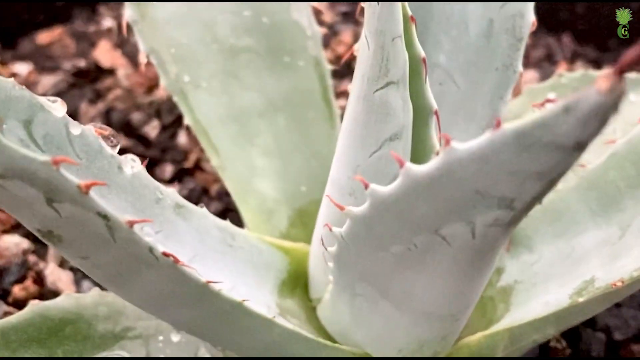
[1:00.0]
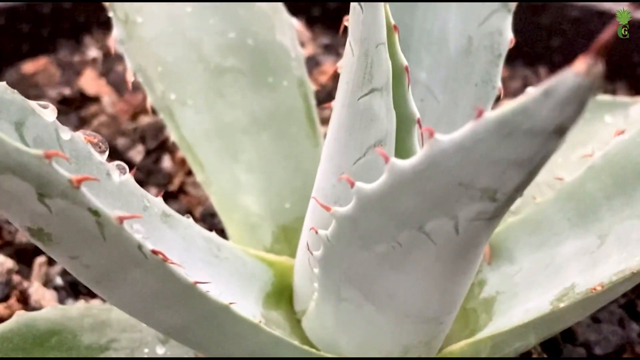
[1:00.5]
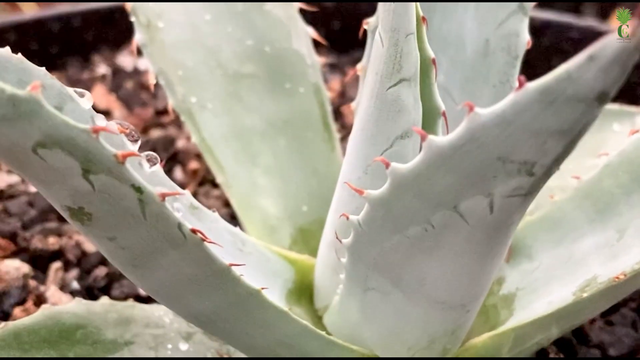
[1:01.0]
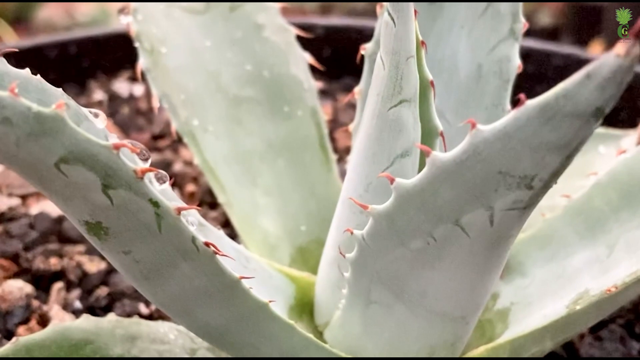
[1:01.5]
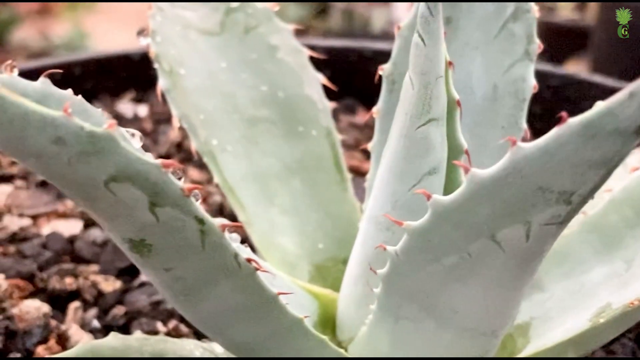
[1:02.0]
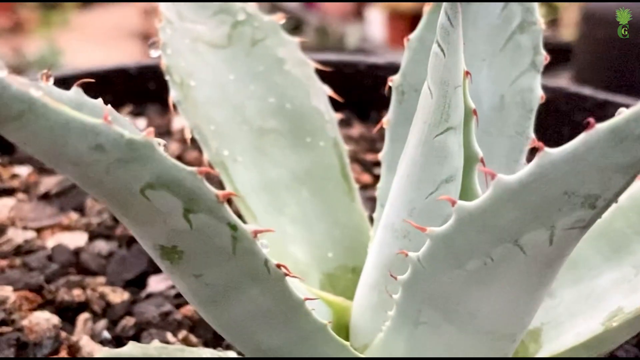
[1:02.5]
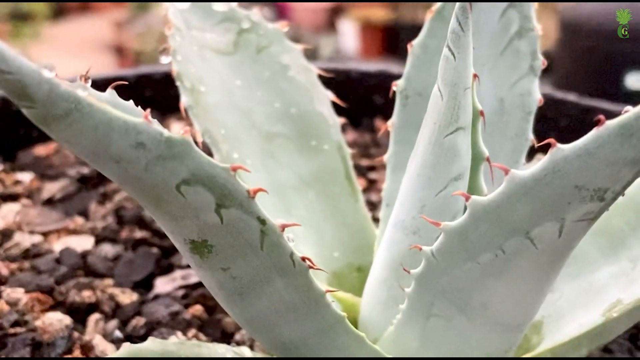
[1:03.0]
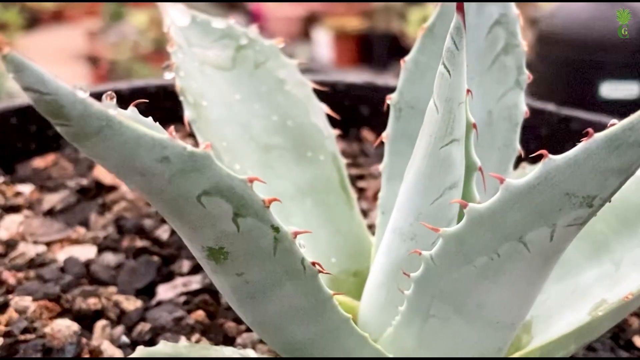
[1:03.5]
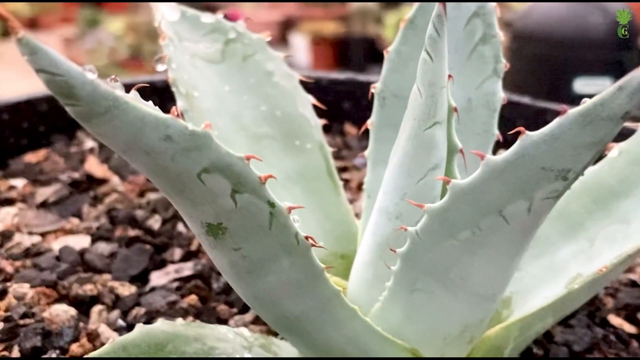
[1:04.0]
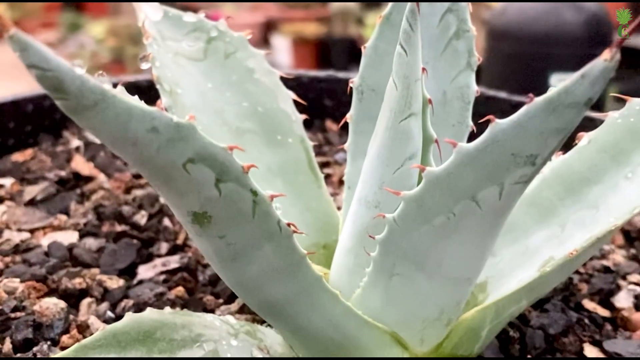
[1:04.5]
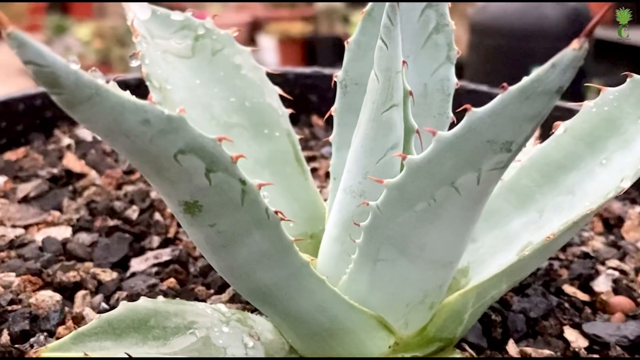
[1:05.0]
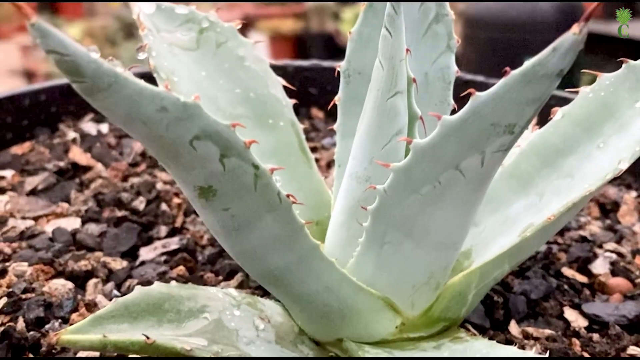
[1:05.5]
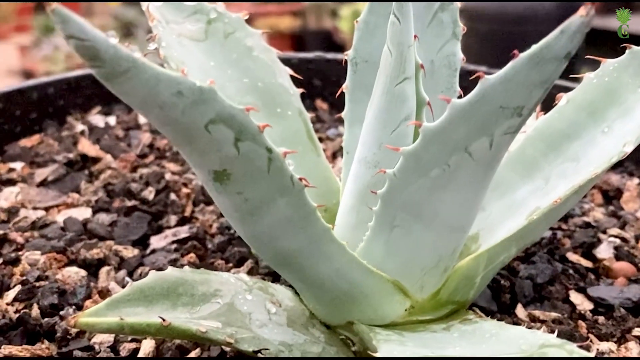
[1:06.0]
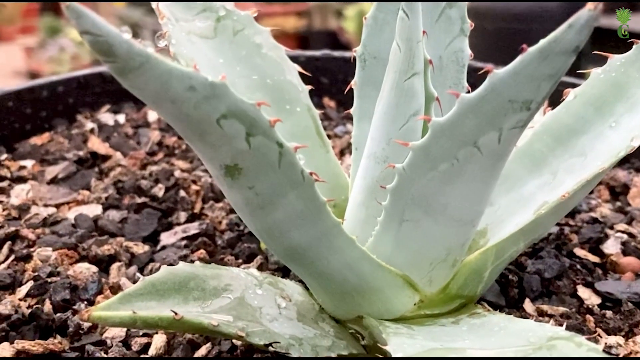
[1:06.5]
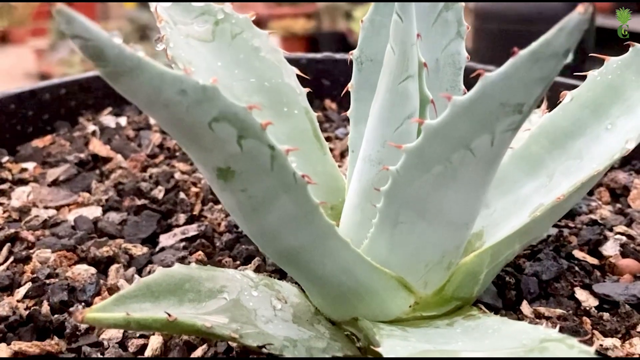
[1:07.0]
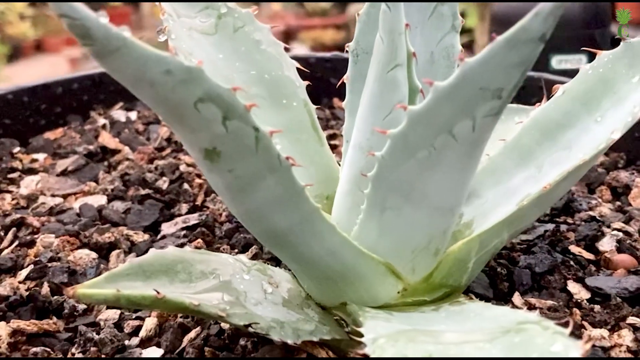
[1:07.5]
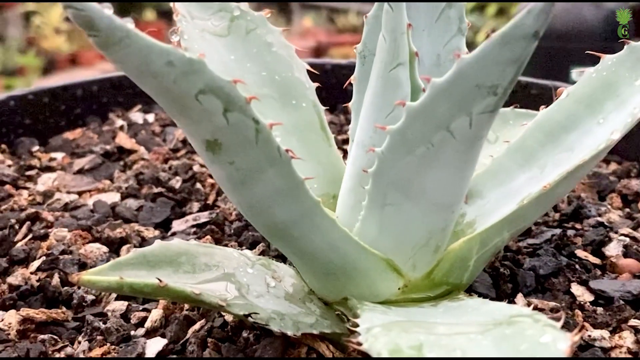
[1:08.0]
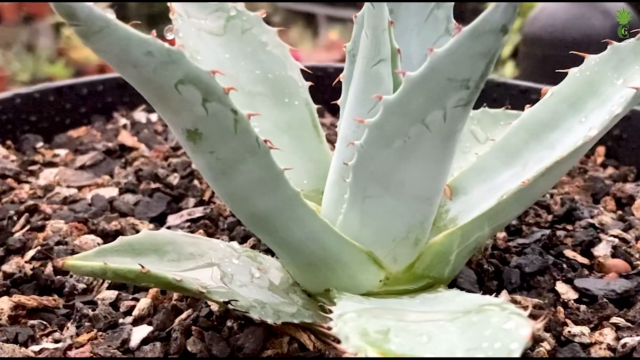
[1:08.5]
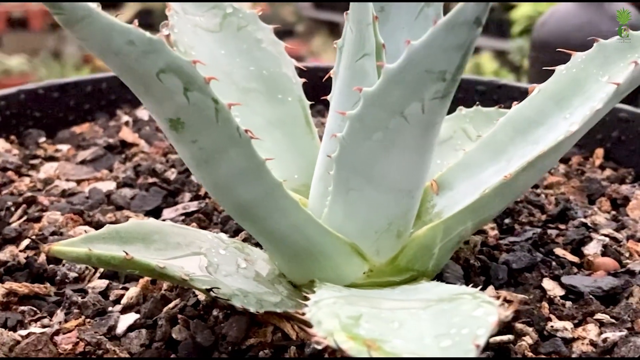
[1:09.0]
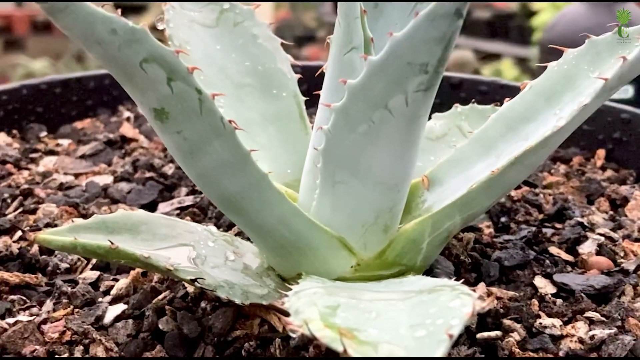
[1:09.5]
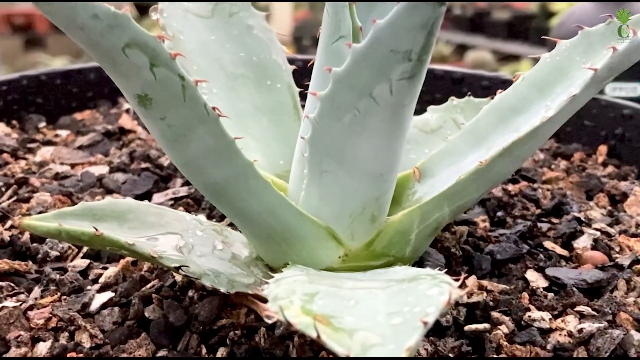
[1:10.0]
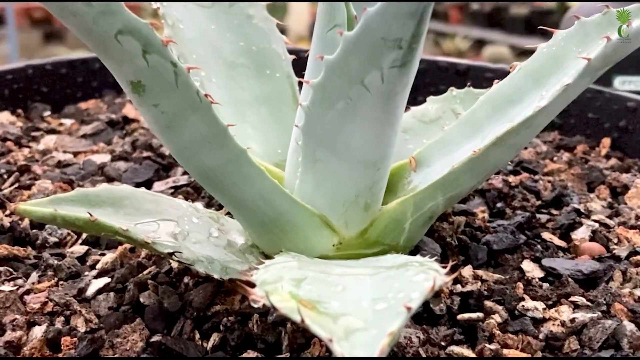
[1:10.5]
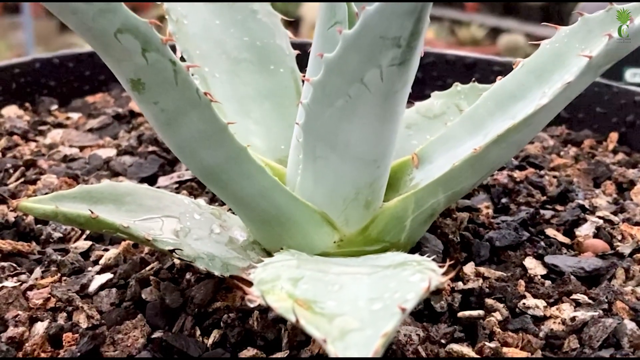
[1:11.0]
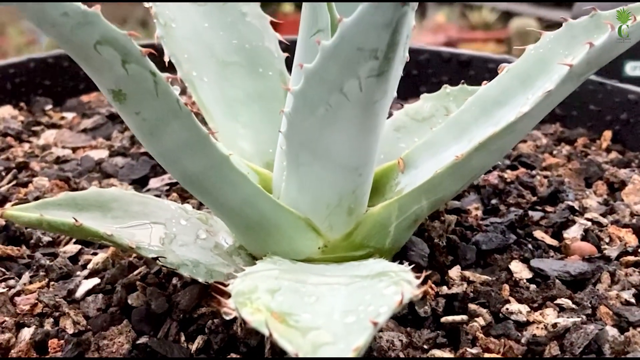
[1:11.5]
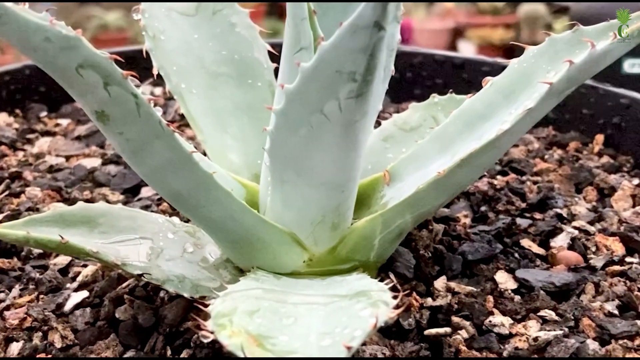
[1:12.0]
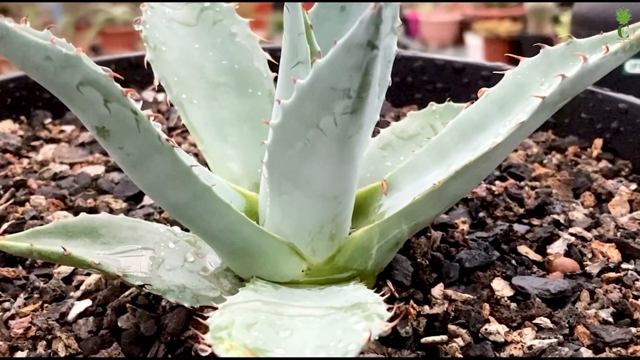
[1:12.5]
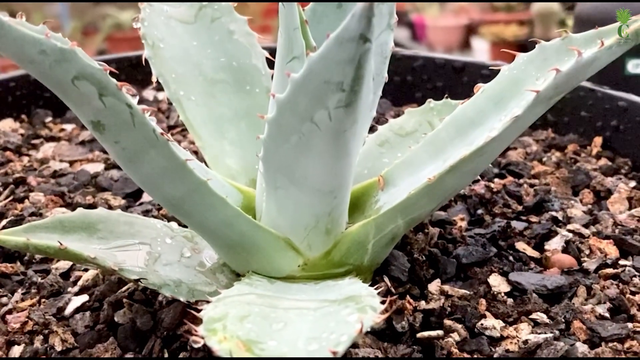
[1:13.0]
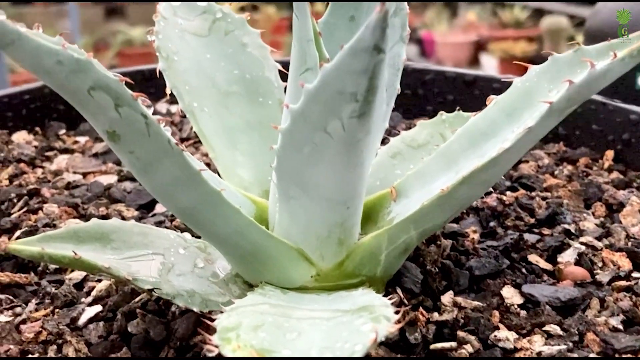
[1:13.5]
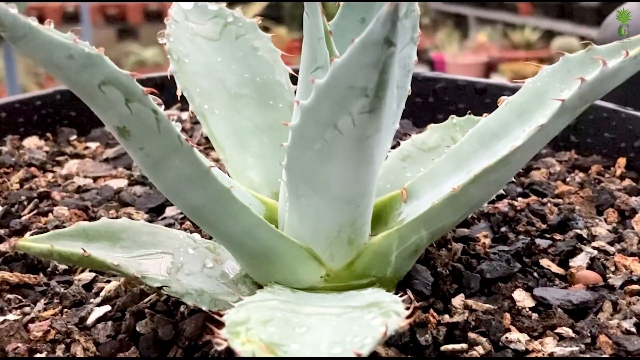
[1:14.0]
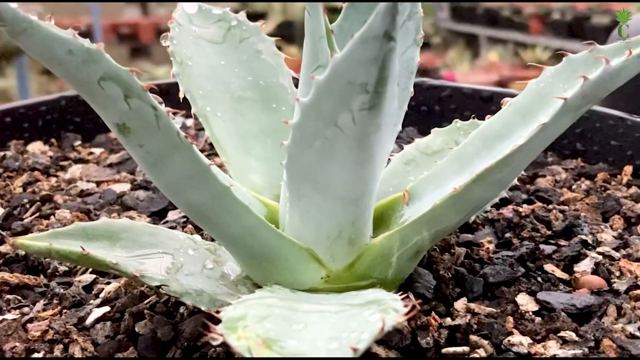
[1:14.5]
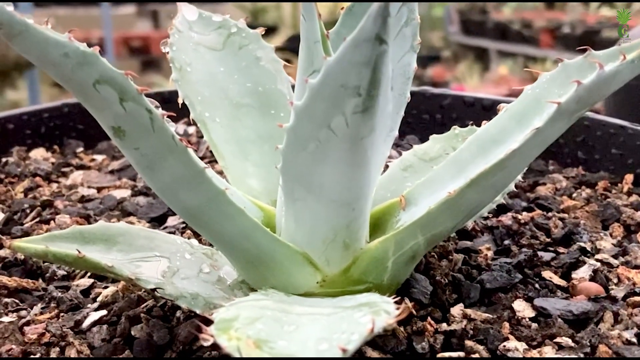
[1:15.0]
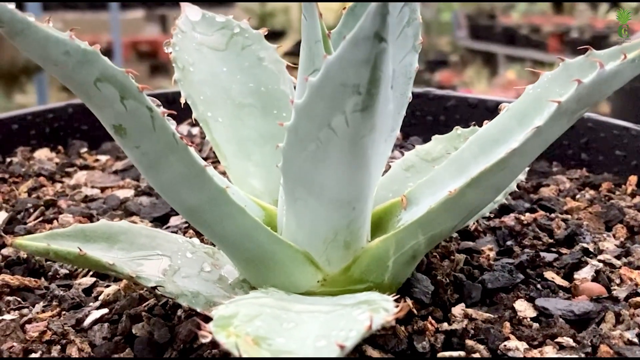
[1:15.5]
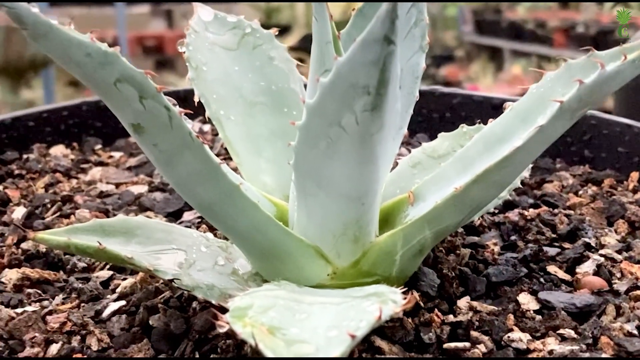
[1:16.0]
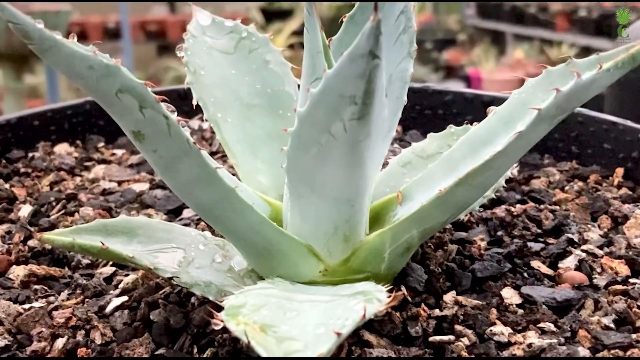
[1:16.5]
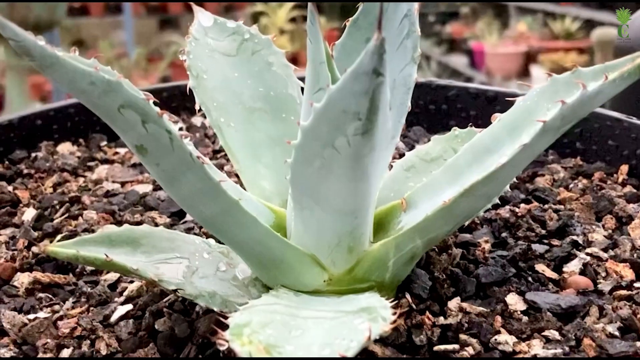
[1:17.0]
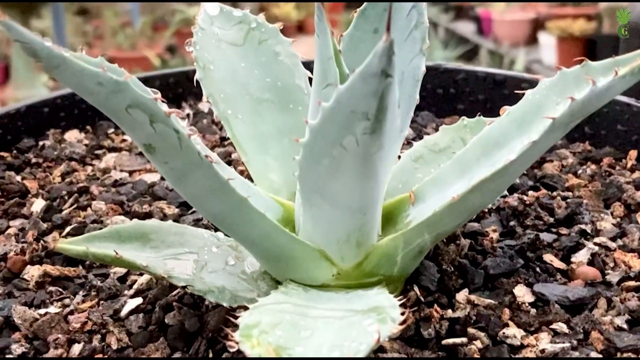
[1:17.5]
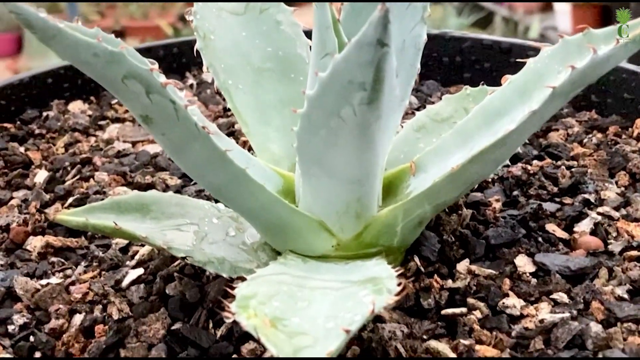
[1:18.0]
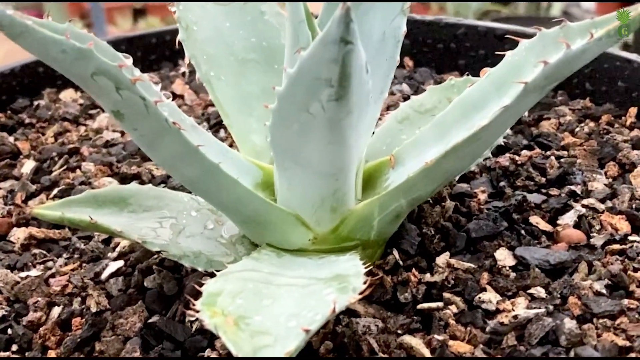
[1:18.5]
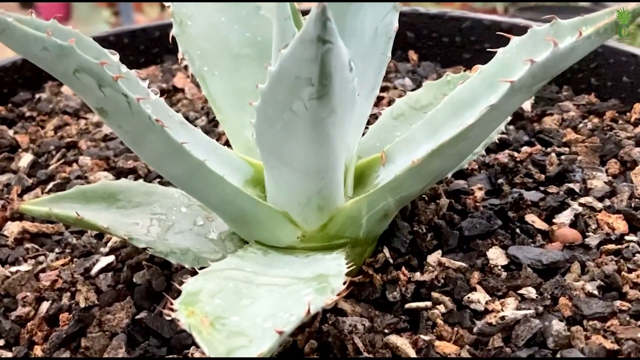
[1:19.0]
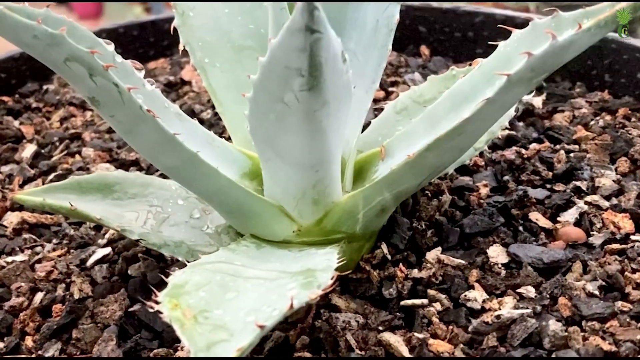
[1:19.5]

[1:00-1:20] The camera zooms in on the succulent and seems to come down to eye level, showing the height of the plant. In the background there seem to be lots of other plants in pots; the place is possibly a nursery specialising in succulents, or perhaps someone's garden. The plant seems very healthy and to be growing quite nicely in its pot. The location seems to be somewhere not very sunny.